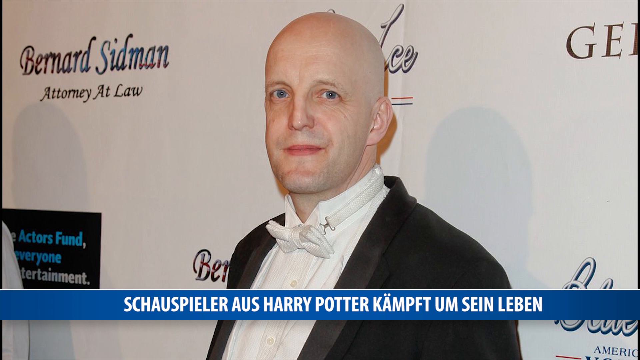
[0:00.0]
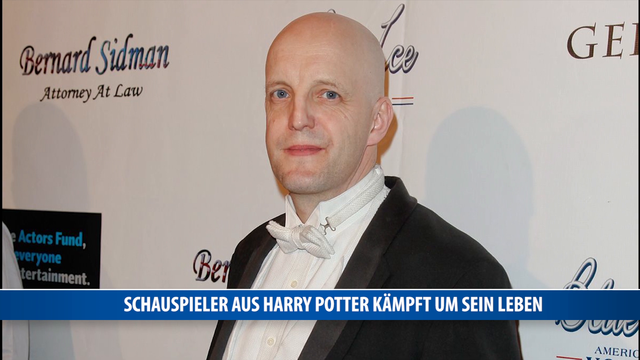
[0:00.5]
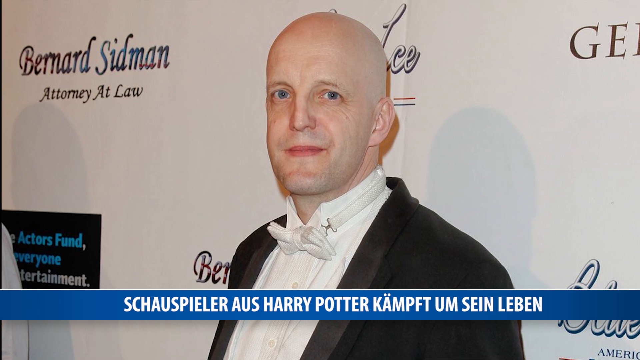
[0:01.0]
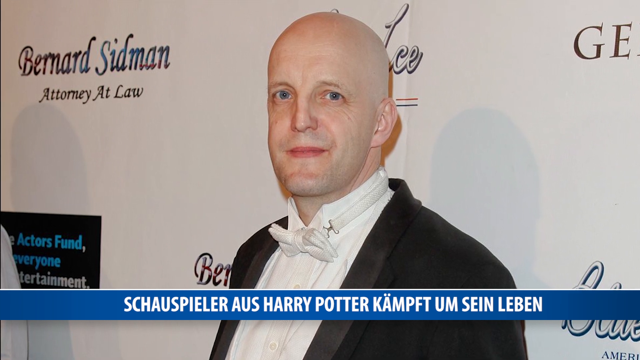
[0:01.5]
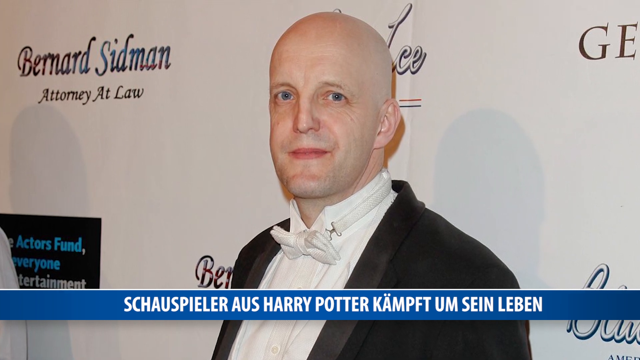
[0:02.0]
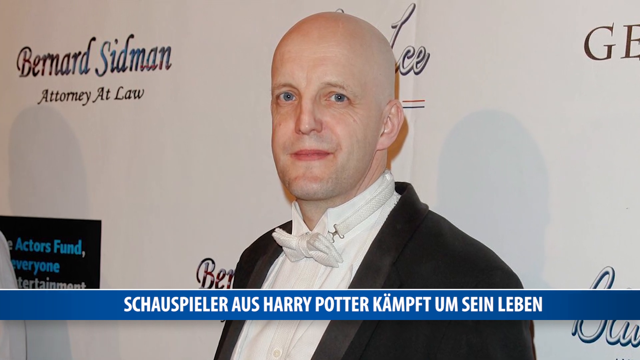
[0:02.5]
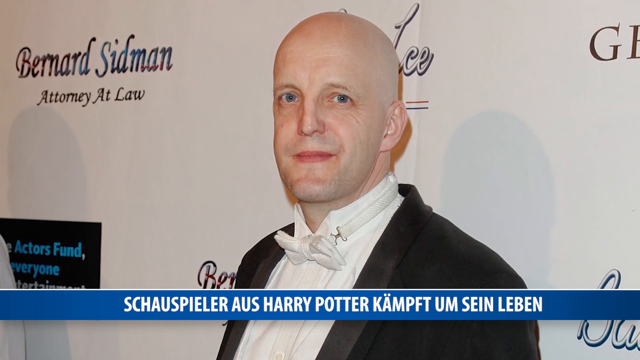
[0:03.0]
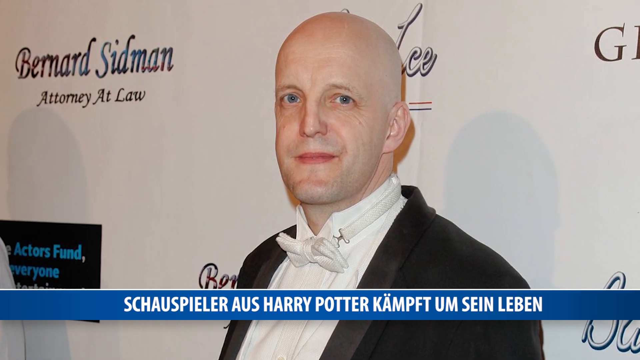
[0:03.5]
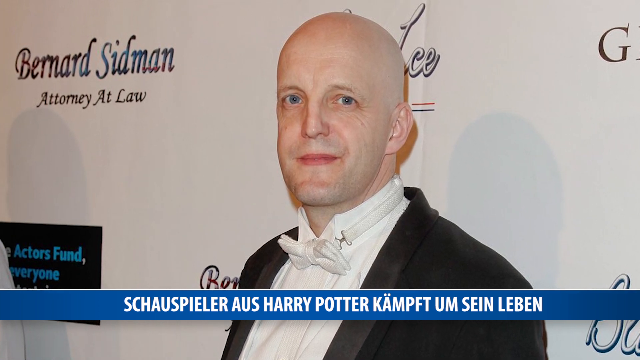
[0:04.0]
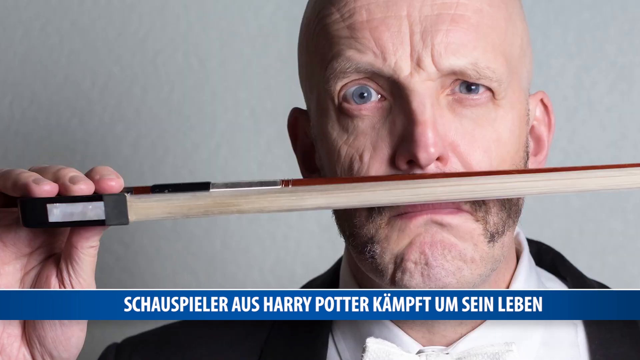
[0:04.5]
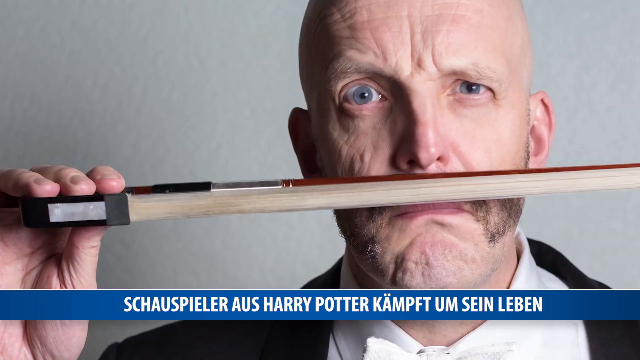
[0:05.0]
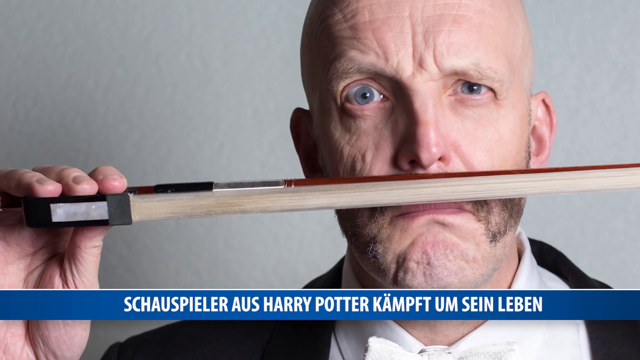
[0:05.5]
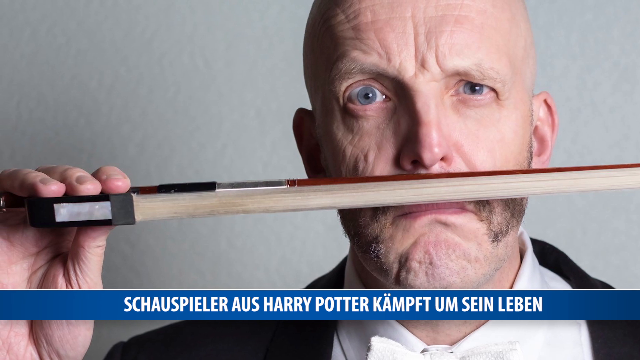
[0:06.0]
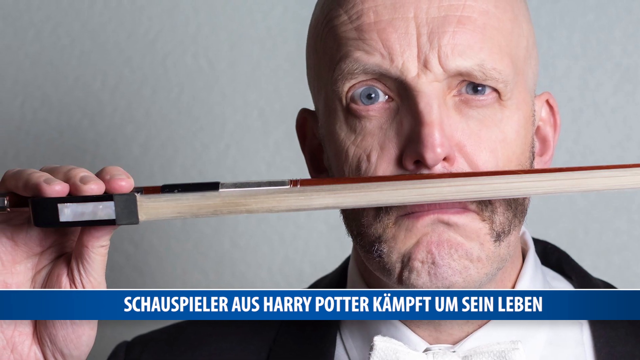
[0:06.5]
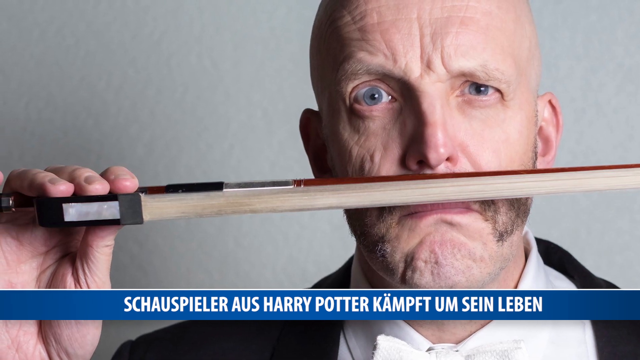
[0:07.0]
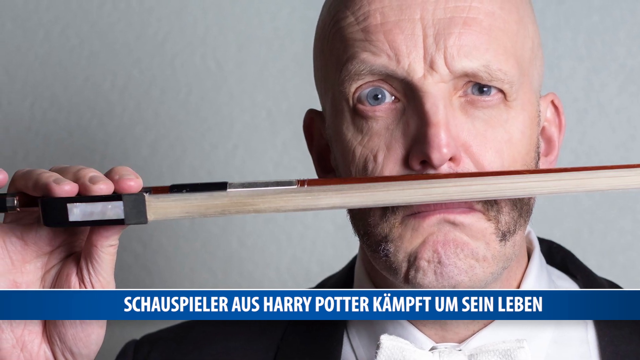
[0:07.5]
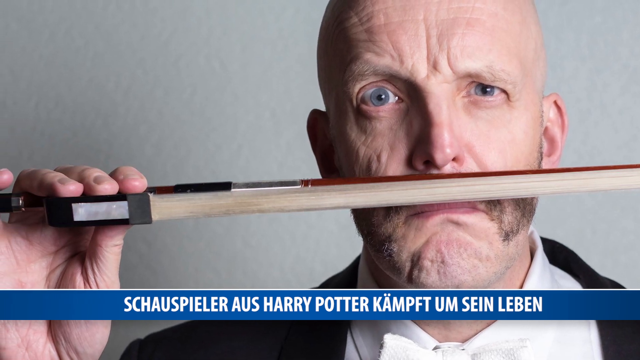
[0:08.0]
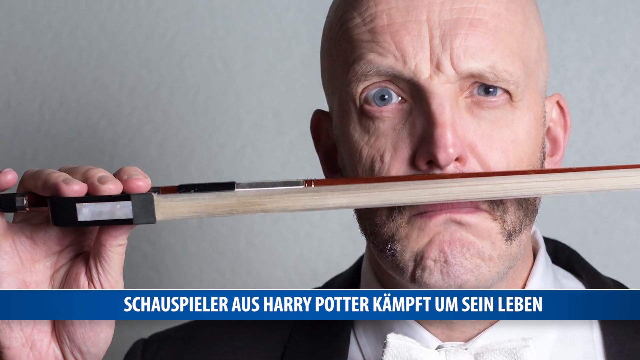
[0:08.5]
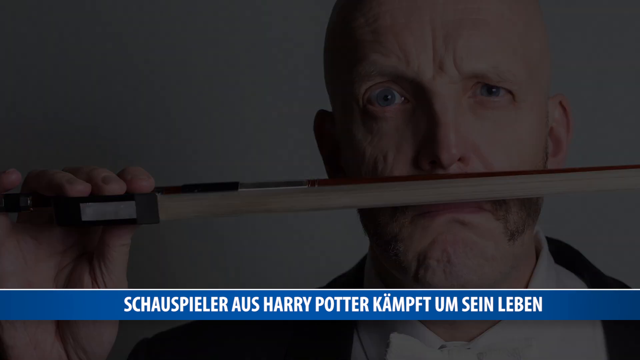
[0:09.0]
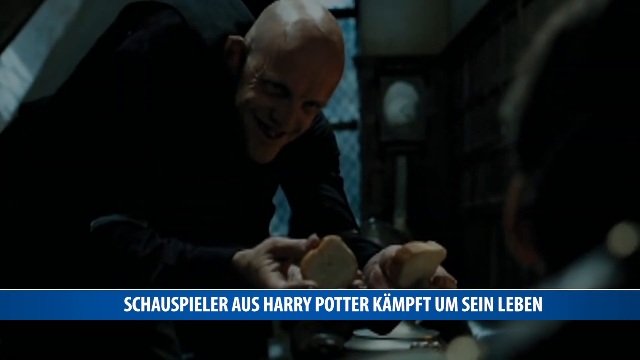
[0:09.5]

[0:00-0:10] In a sort of news-style video, a sort of bald Caucasian individual with kind of bluish eyes appears in a black suit against a white background, along with something regarding Harry Potter, with the text not in English. The individual is then shown with a sort of wand, or maybe an instrumental bow, in front of them, and then depicted in a Harry Potter-type movie setting.